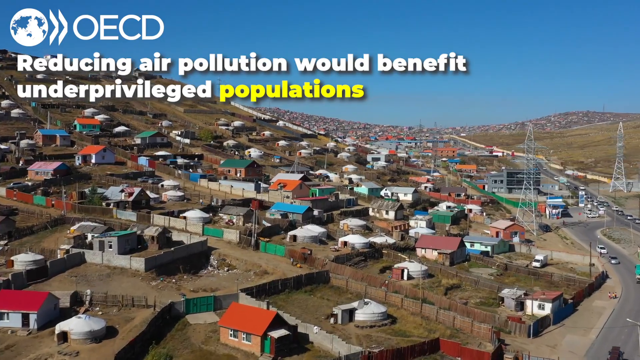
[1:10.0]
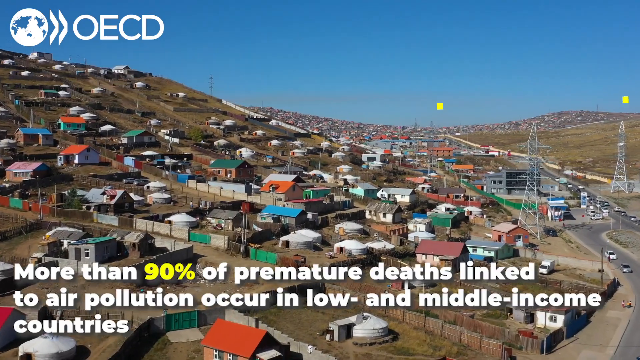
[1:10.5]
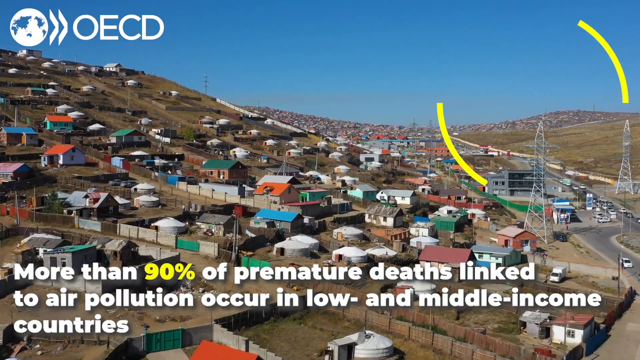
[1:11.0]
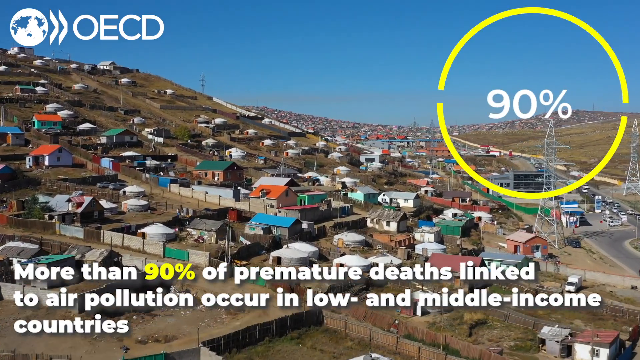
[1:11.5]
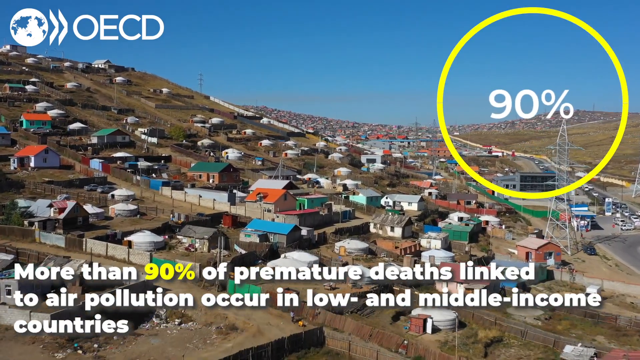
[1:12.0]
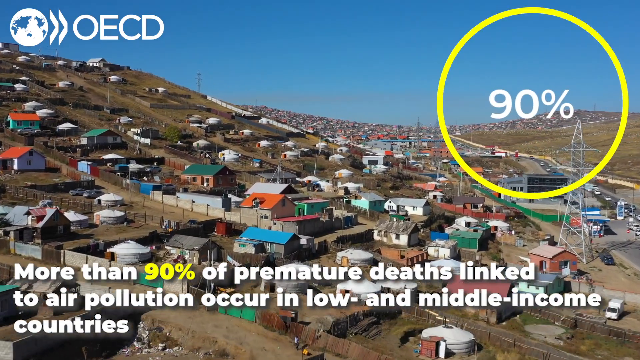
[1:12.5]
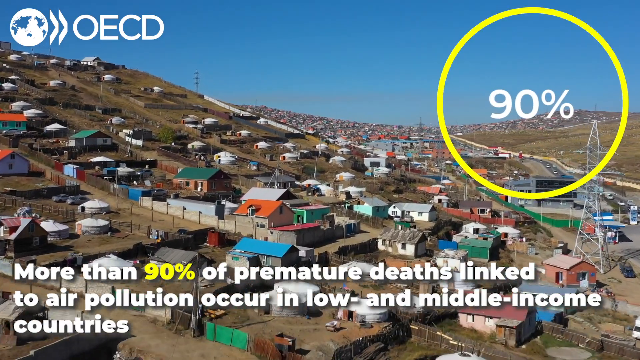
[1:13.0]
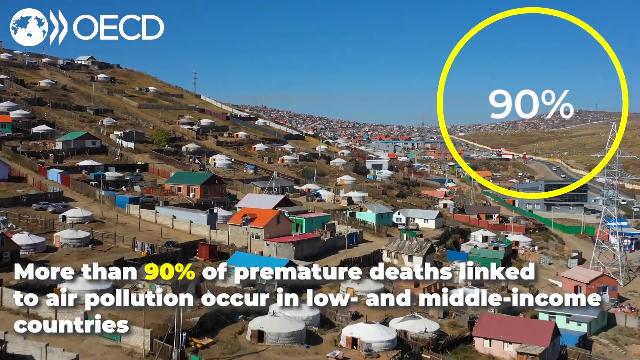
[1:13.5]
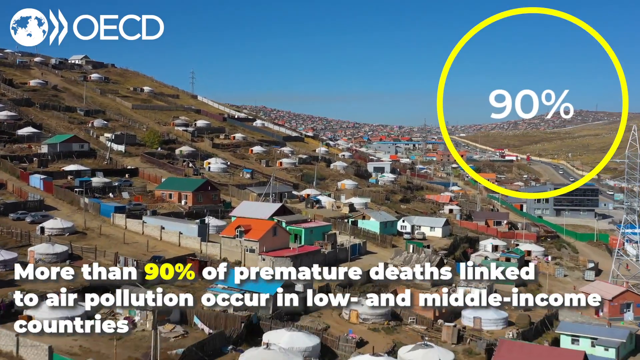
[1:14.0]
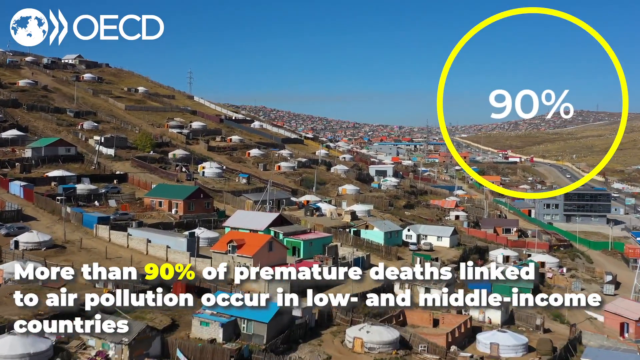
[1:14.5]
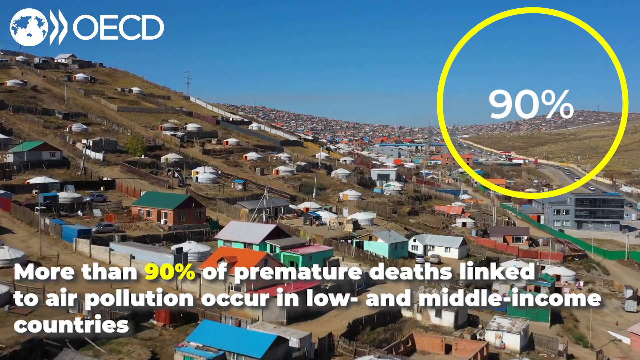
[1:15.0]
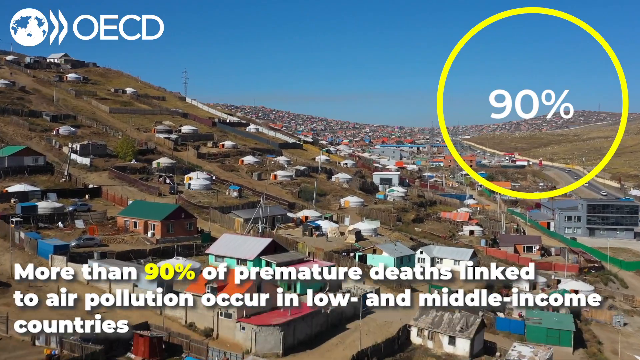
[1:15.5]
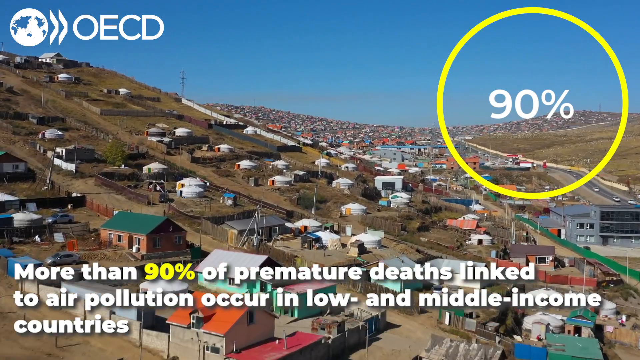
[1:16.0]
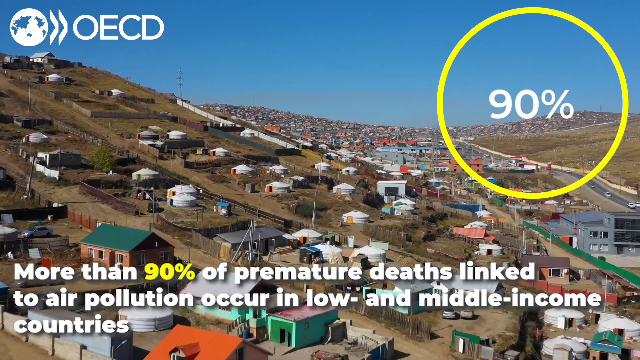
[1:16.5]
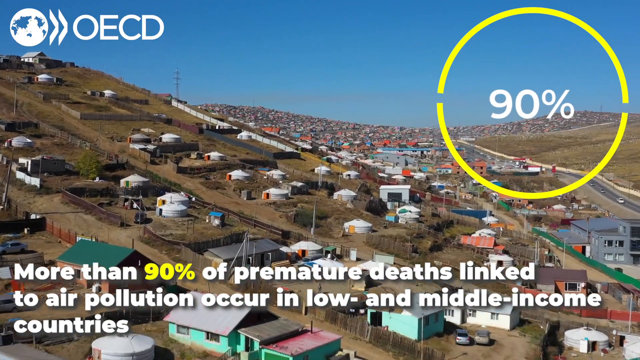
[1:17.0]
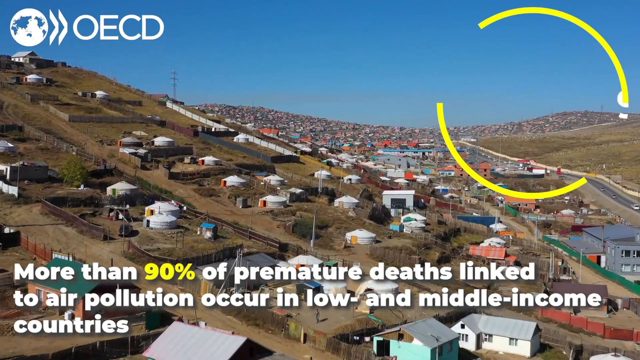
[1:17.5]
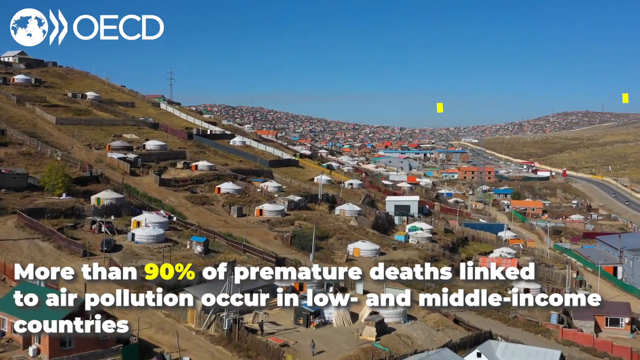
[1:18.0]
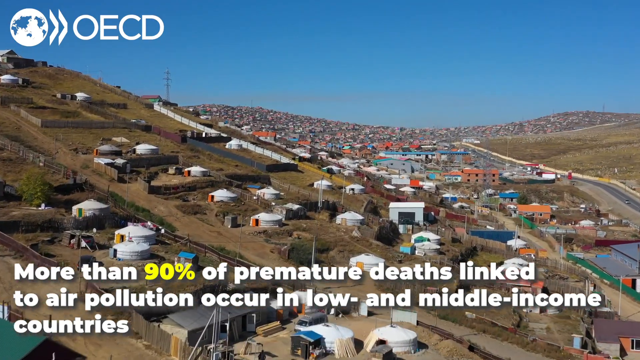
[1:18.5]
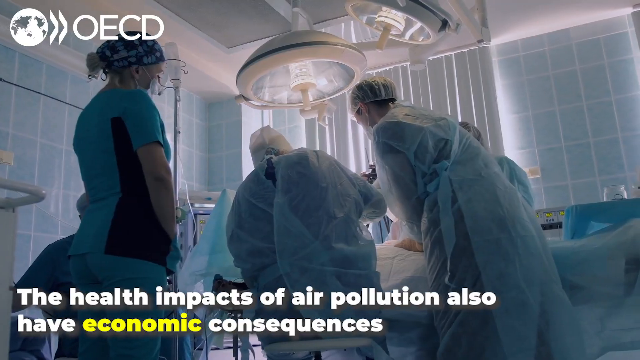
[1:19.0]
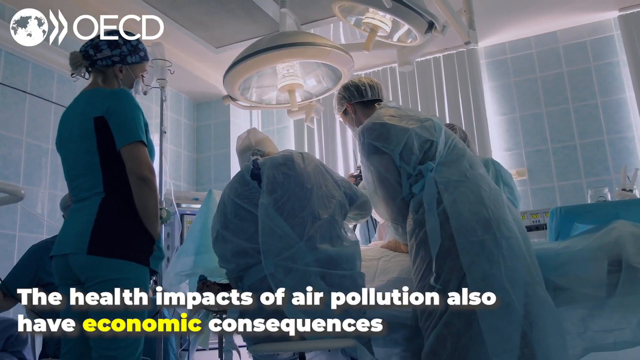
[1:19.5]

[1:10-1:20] Text at the bottom of the screen reads "More than 90% of premature deaths linked to air pollution occur in low and middle income countries" as the camera picks up speed panning over the shantytown. At the top right, "90%" is written with a yellow circle around it. This disappears off the screen, and the scene changes to a very clinical, very white operating room with four or five people in it, all wearing hats, face coverings and what appear to be scrubs. Two large white lamps are above the operating table. The person on the left is standing and seems to be observing the next person, who is sitting down and appears to be doing the main operation, seemingly using their right hand with their elbow up high. The person next to them is leaning over watching, and another person in the background is hidden by the person in front of them.